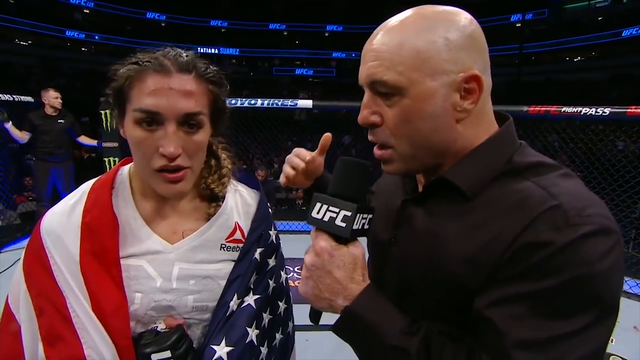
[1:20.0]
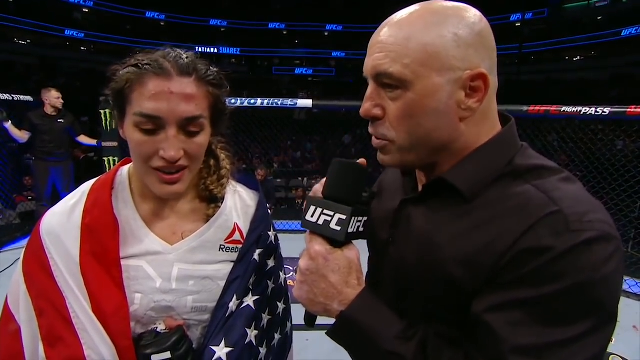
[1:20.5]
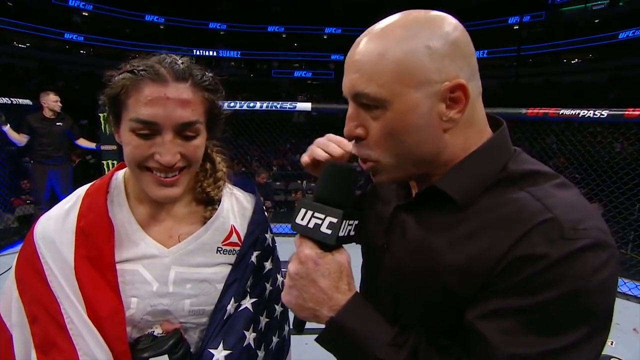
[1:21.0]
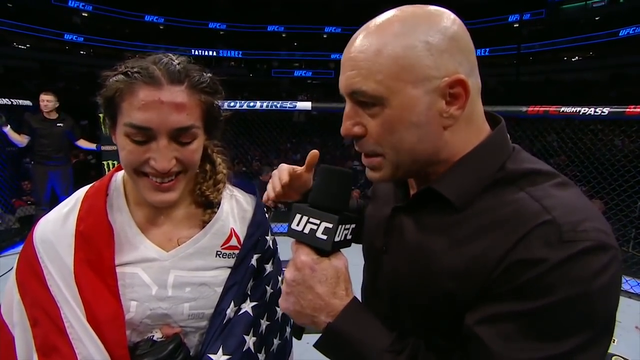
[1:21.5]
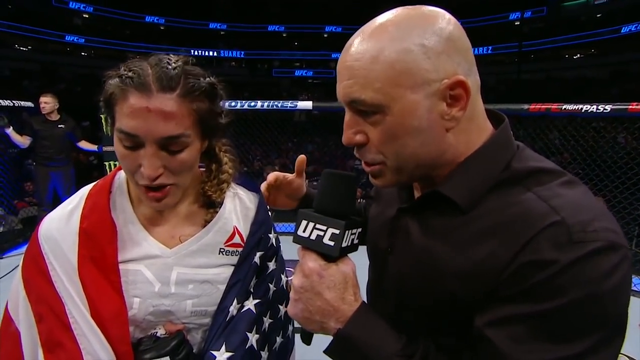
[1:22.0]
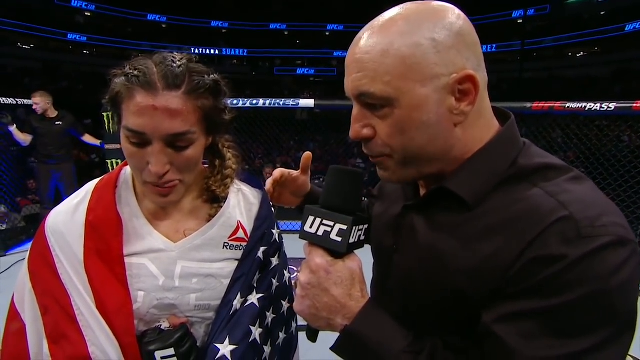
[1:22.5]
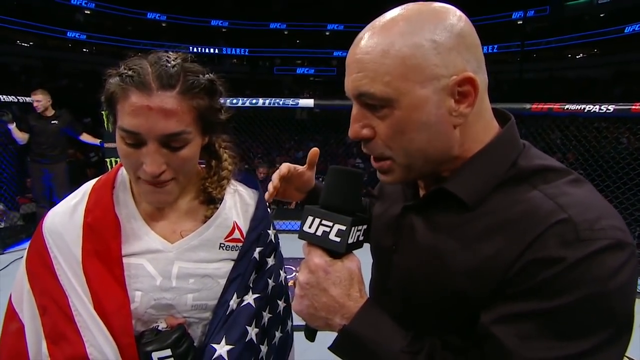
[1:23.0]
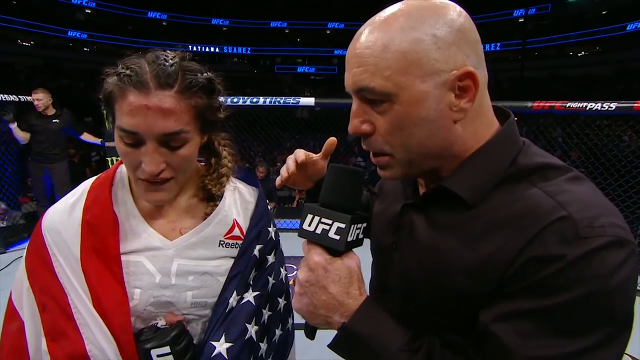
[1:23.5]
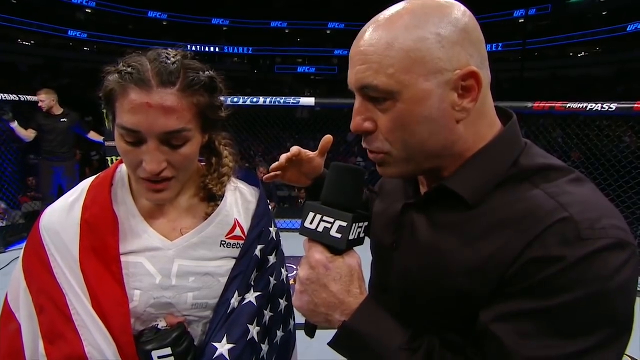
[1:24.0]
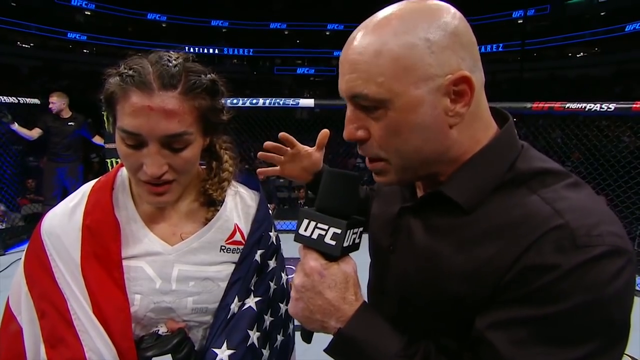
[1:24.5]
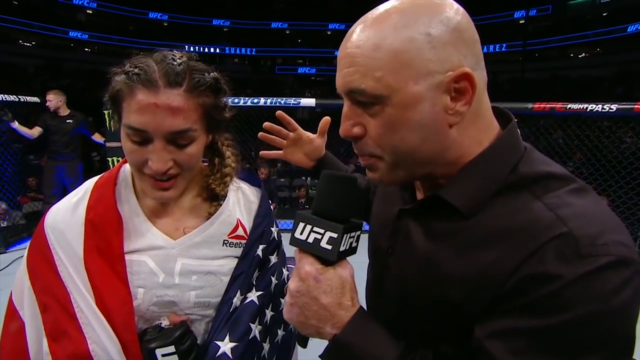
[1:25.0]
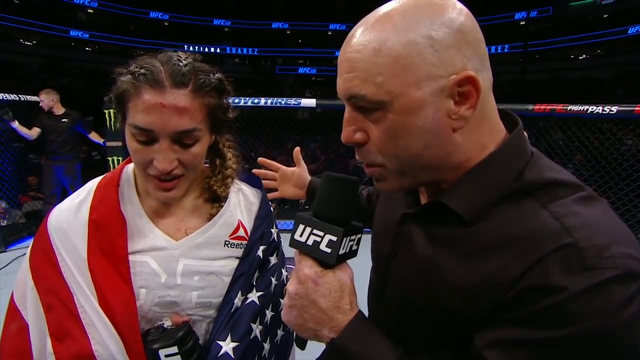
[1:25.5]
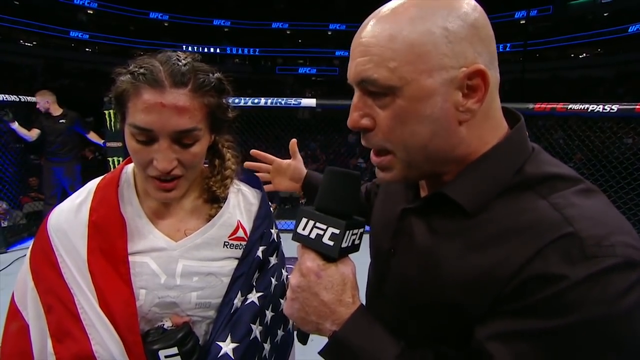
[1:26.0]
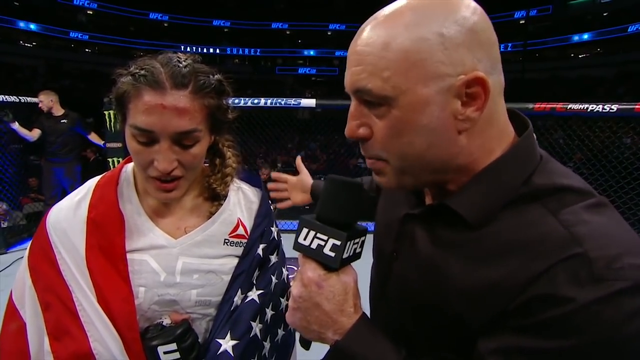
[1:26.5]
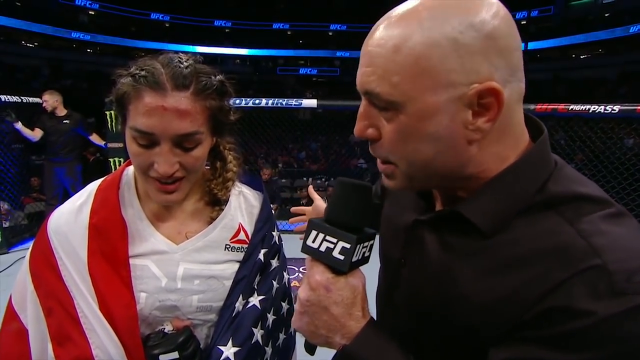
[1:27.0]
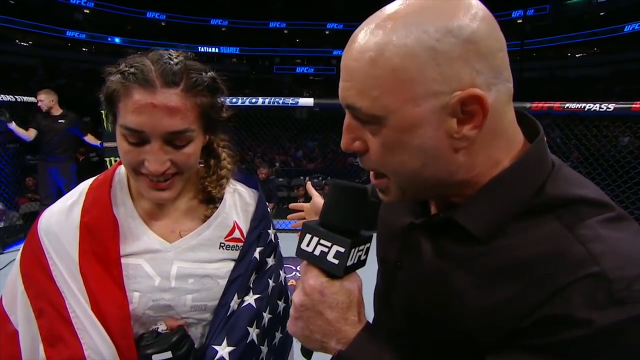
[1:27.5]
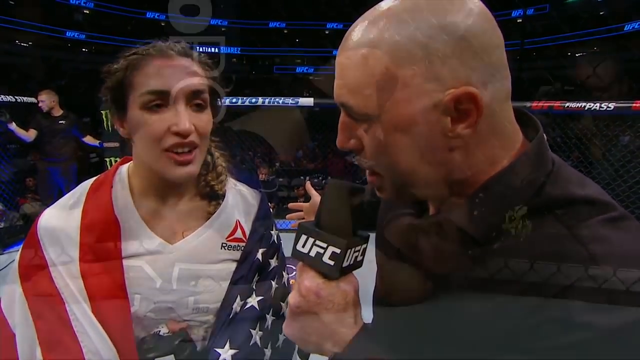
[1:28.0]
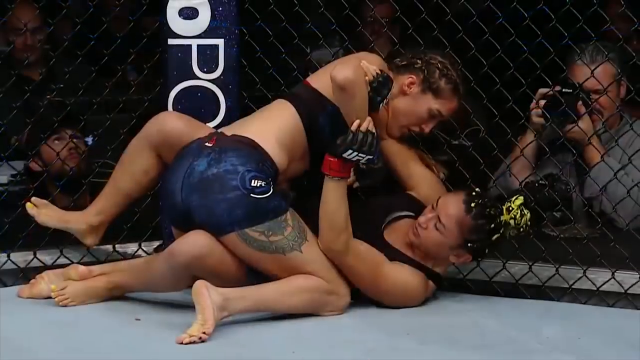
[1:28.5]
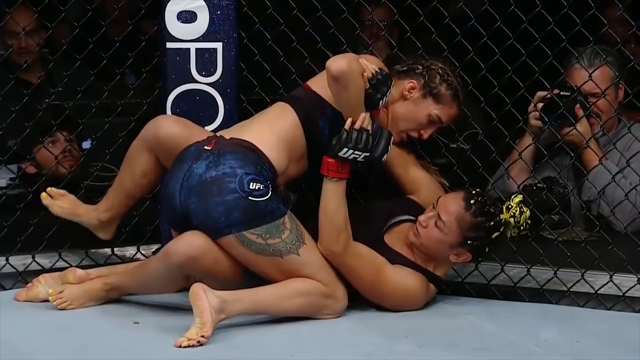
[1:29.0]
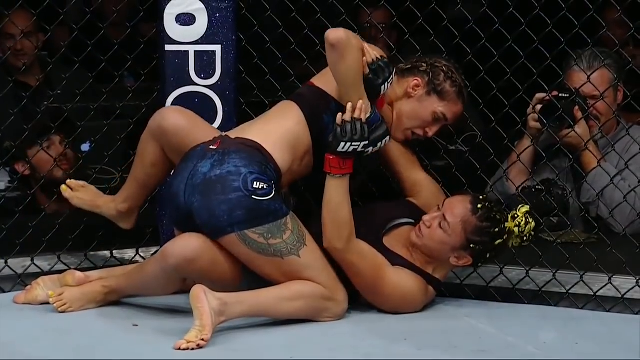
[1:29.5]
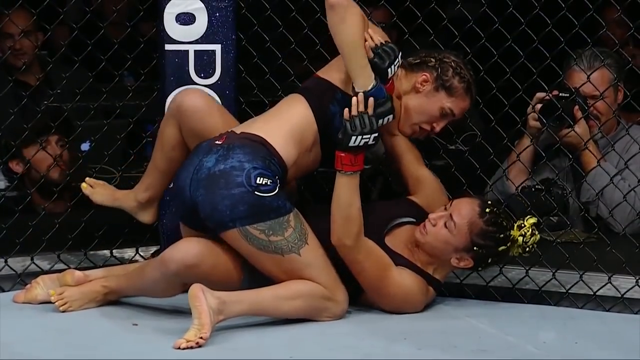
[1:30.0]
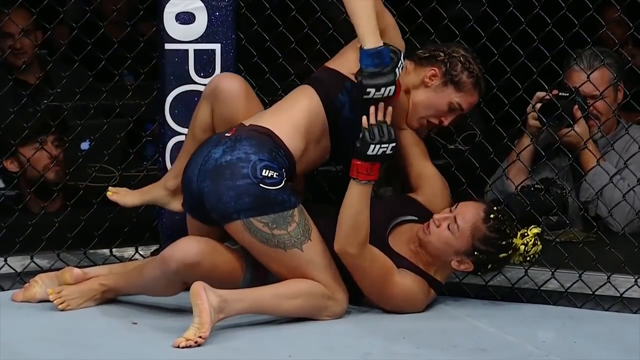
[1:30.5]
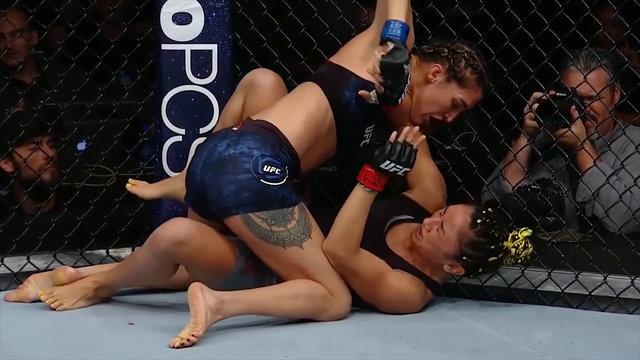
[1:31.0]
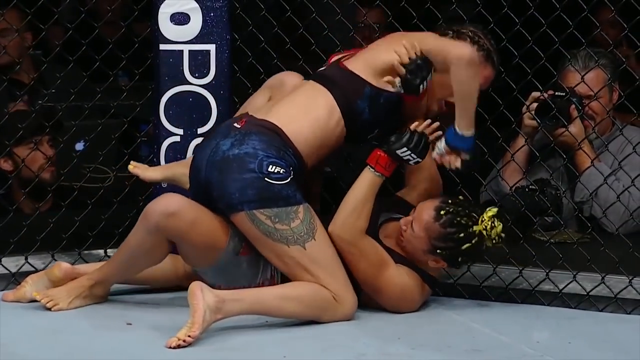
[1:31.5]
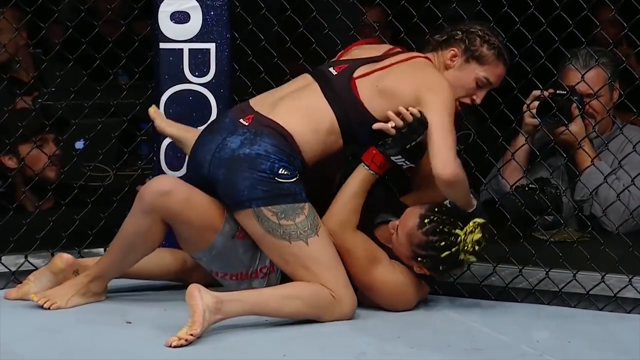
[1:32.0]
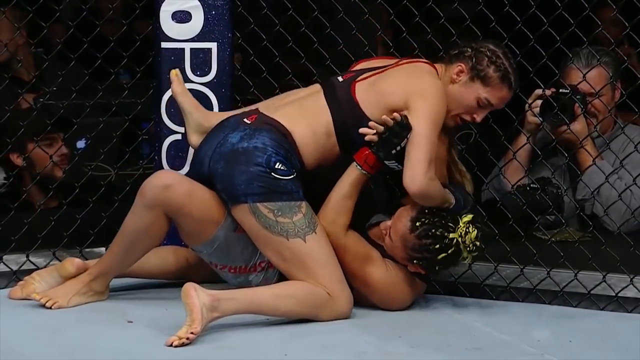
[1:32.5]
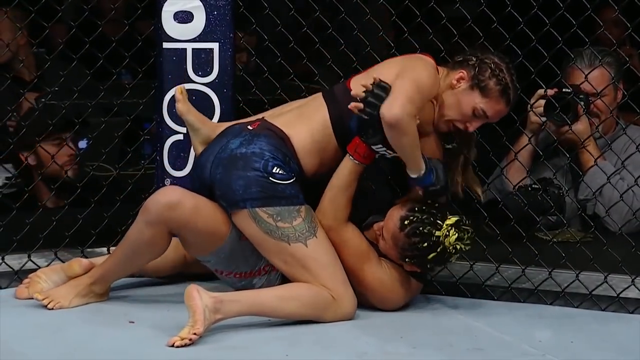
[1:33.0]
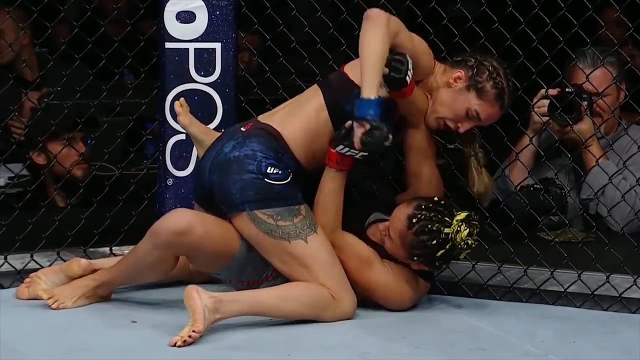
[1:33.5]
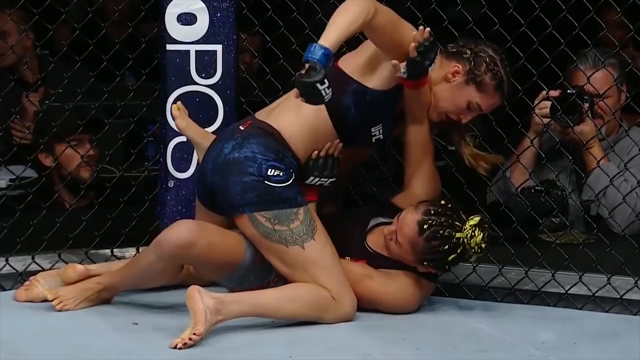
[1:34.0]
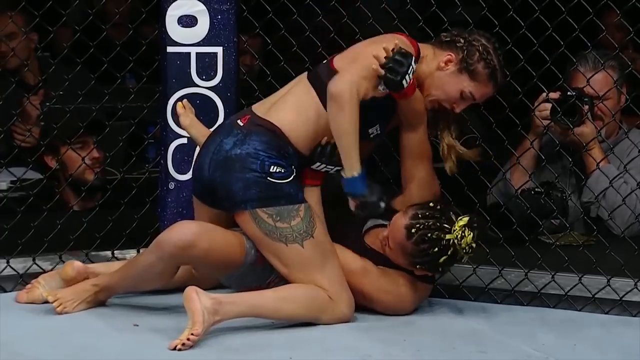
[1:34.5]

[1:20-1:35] The announcer gestures with his right hand while holding the UFC microphone in his left. The video then cuts to a slow-motion replay: a fighter in blue shorts with "UFC" in white letters and a black top has the other fighter on the ground and punches her in the head with her right hand. The puncher has a tattoo on her right thigh and gloves that are blue, or at least blue at the wrist, though they could be black. The woman on the ground, who wears UFC fingerless gloves and a black top, tries to block; her black hair is pulled back in a kind of cornrow style with yellow accents, especially in the bun. They are up against the black cage. To their right, a photographer holds a black camera up to his eye with both hands. A turnbuckle has white lettering, possibly "PC".